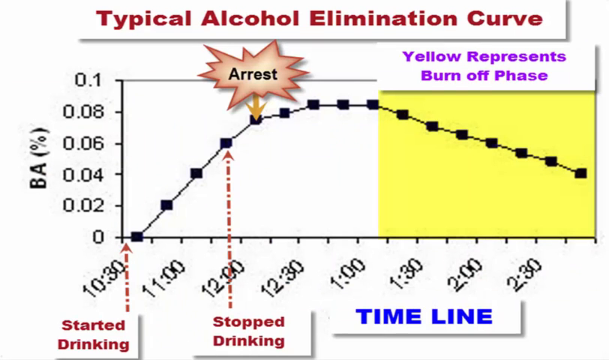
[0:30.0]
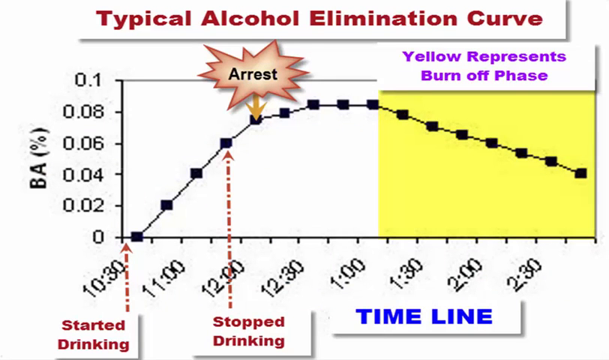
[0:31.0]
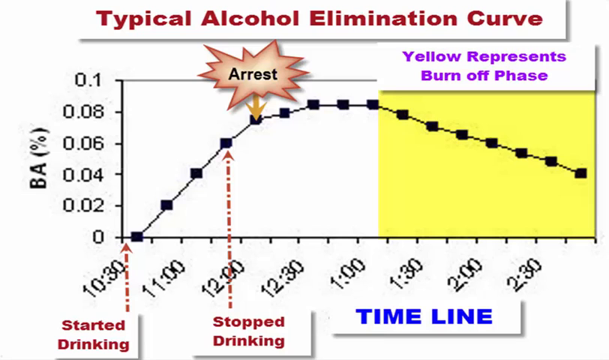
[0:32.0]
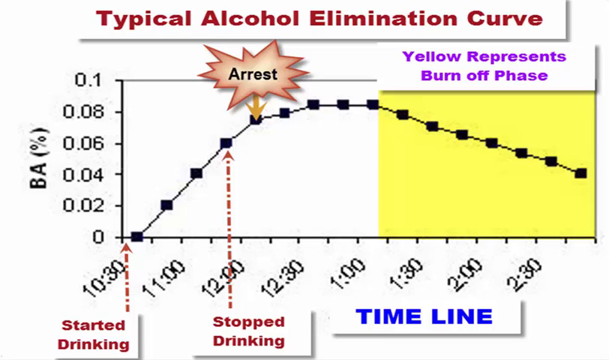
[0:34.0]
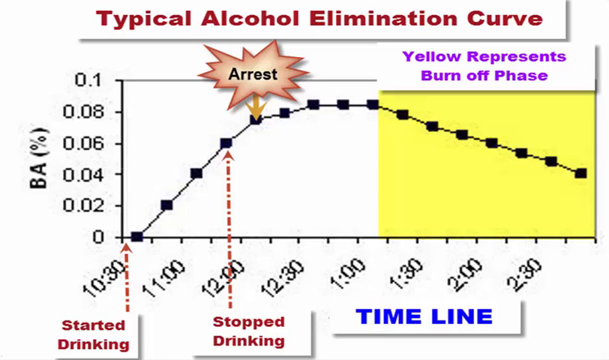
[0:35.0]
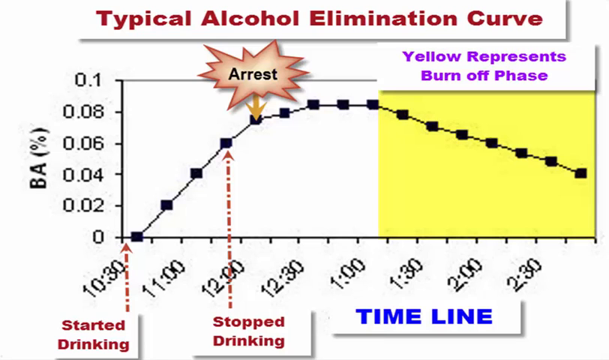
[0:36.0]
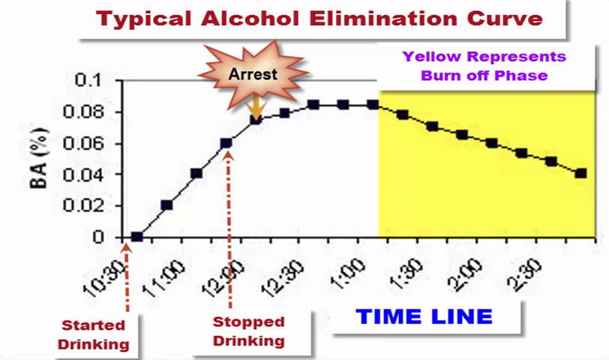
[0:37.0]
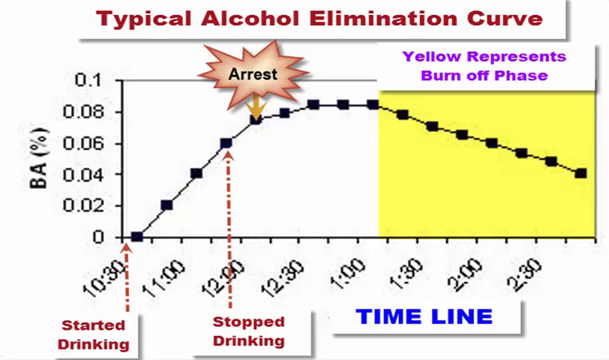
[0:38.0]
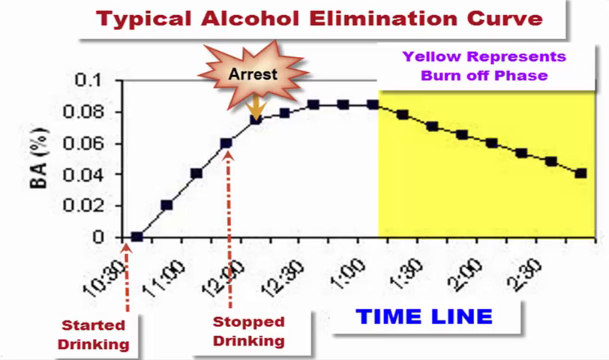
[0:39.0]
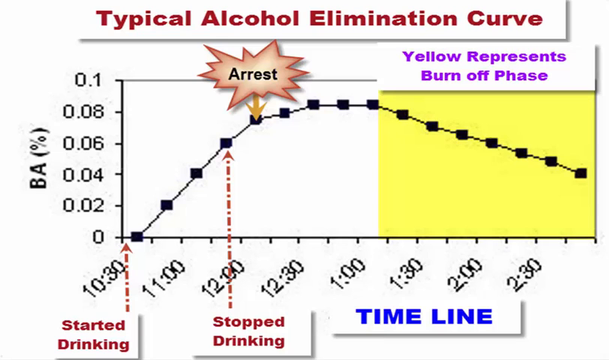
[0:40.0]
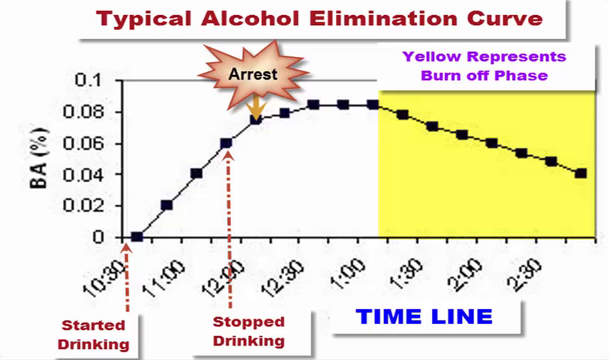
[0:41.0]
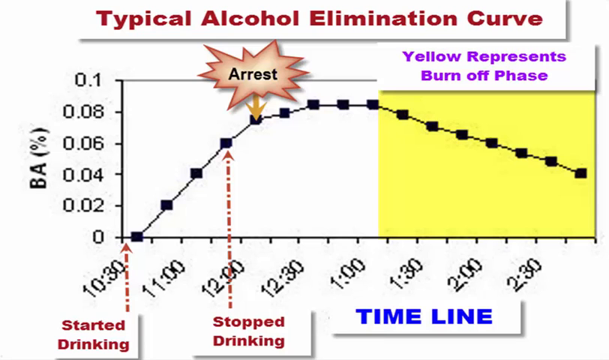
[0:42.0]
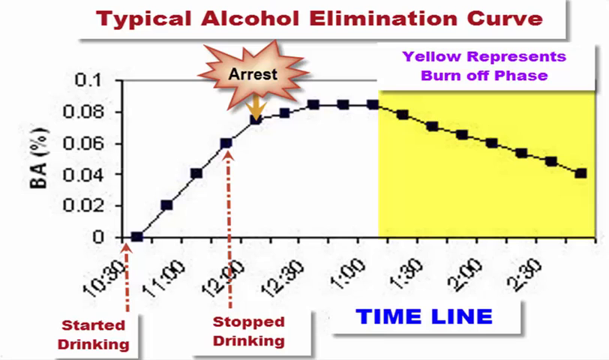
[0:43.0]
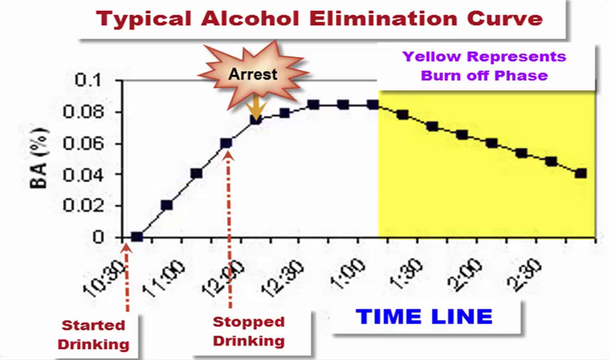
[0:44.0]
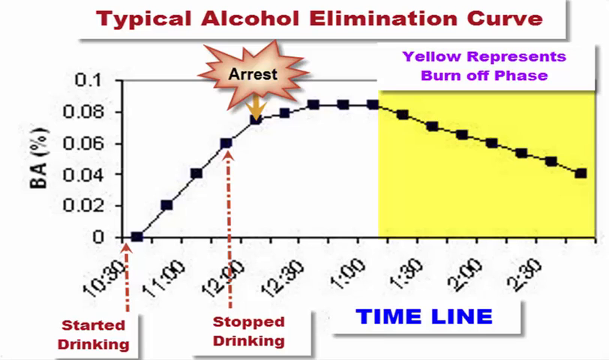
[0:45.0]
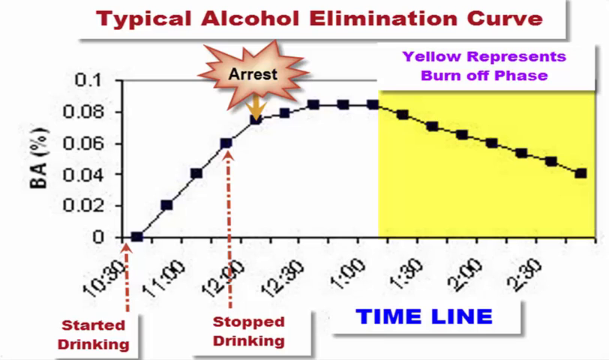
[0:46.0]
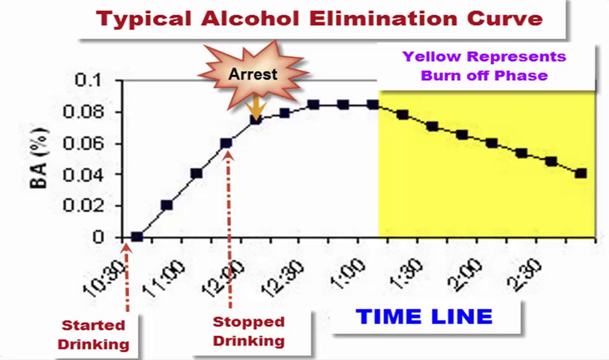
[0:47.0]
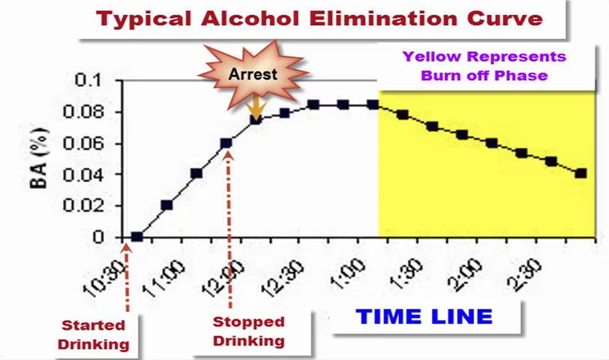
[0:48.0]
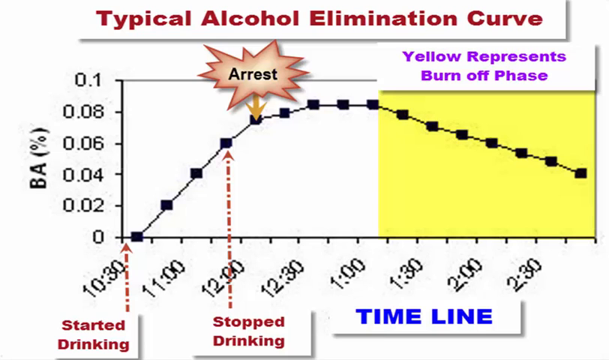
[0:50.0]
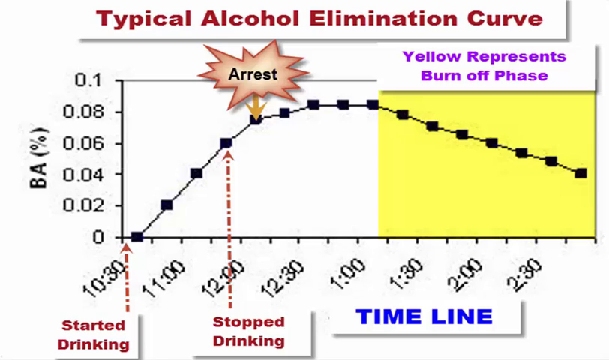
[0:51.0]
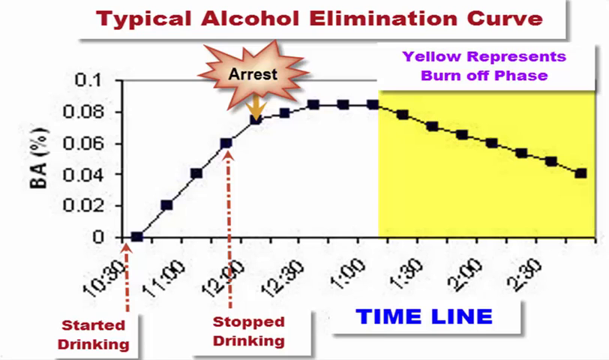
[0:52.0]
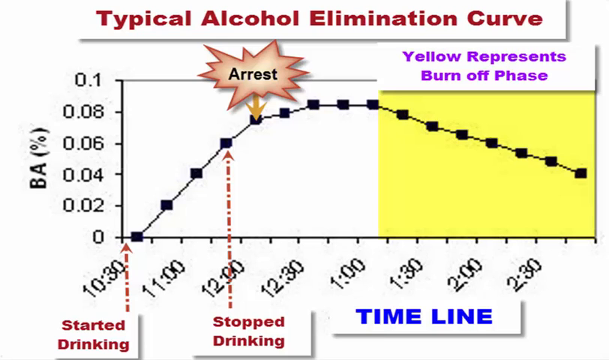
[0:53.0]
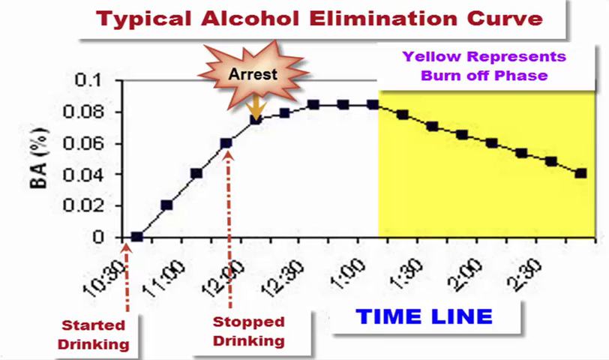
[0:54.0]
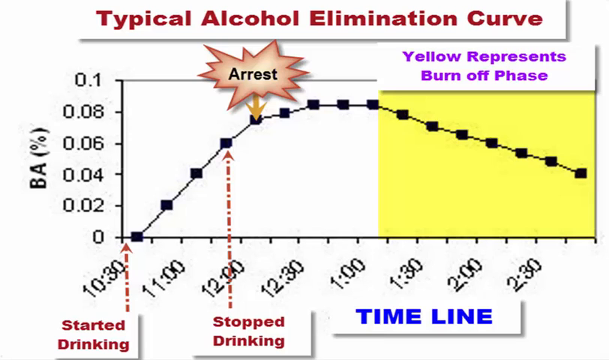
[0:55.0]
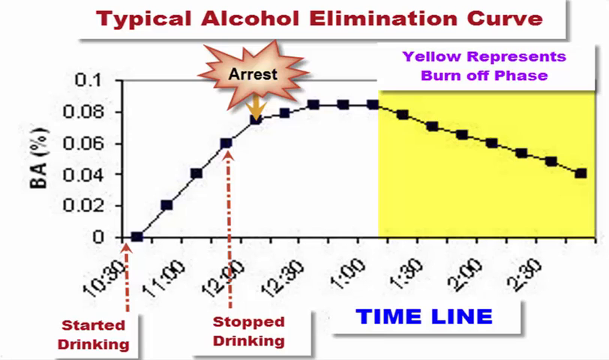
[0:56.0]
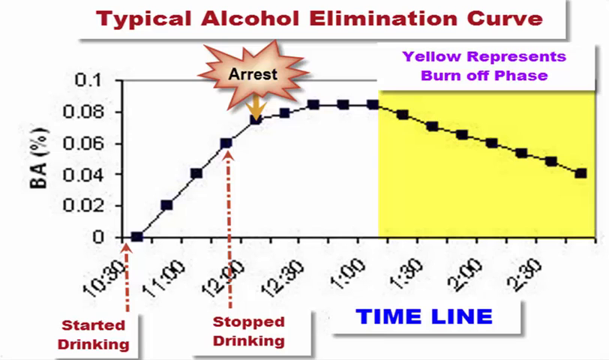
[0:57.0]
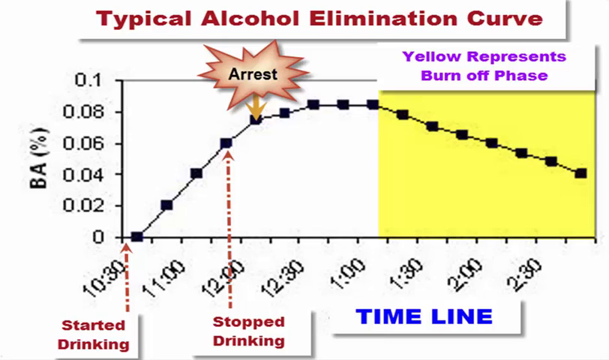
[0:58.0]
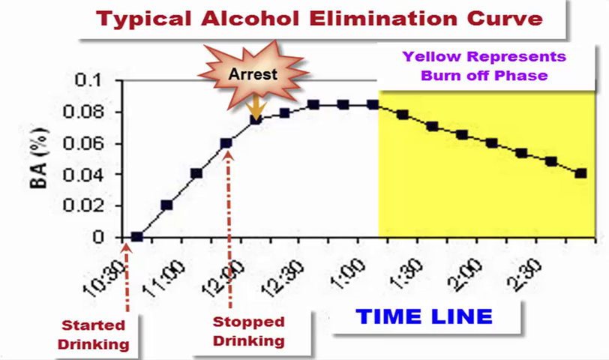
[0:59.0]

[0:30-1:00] The public service announcement for TeamDUI.com shows a slide with a graph of blood alcohol over time. With drinking starting at 10:30, the graph marks that by around 12:15 there would be enough alcohol in the system to be arrested. The curve kind of plateaus around 12:45, stays at that plateau until 1:15, and then starts to go down. That part of the curve is yellow and represents the burn off phase. It keeps going down until it reaches the end of the chart at around three o'clock in the morning, still not down to zero.